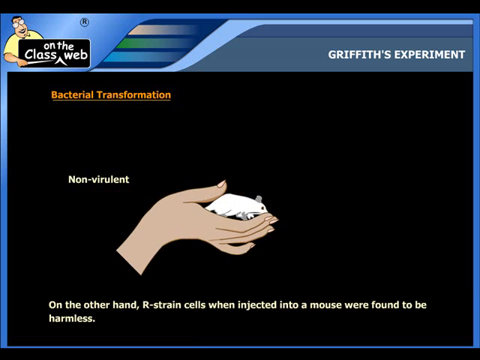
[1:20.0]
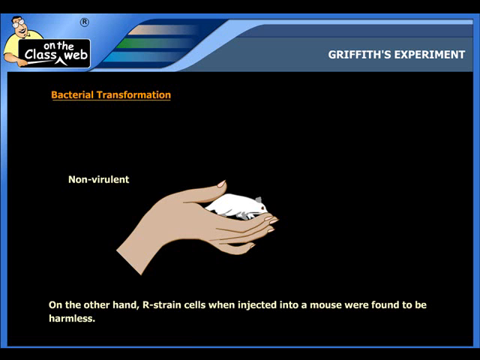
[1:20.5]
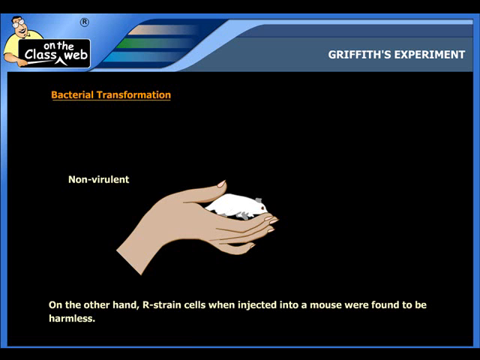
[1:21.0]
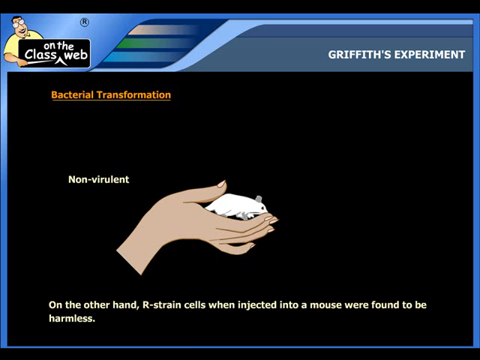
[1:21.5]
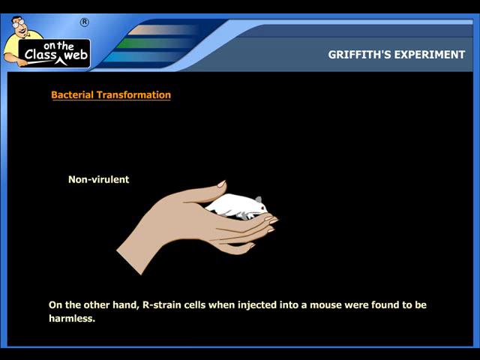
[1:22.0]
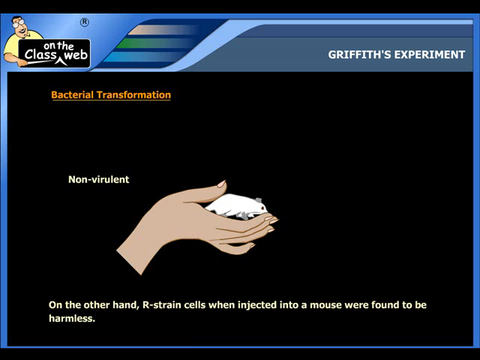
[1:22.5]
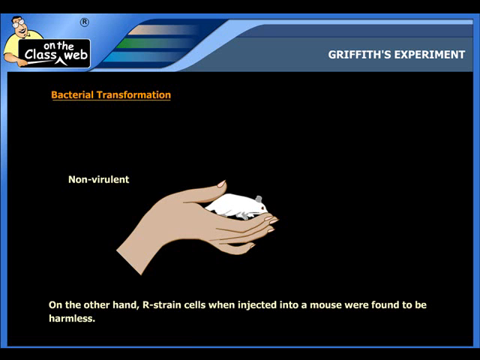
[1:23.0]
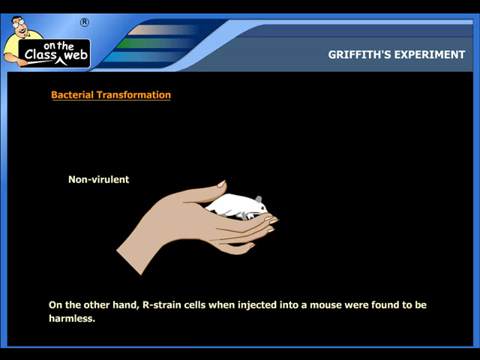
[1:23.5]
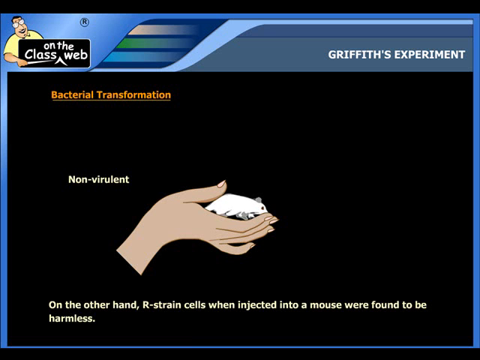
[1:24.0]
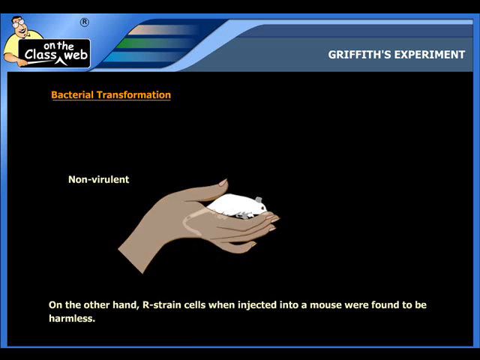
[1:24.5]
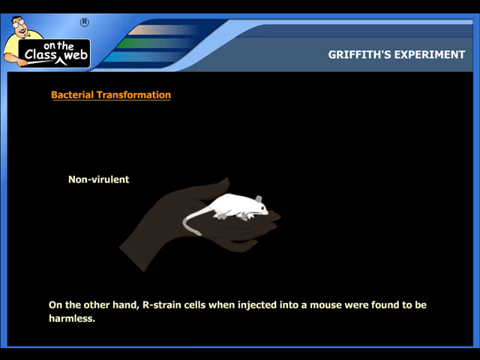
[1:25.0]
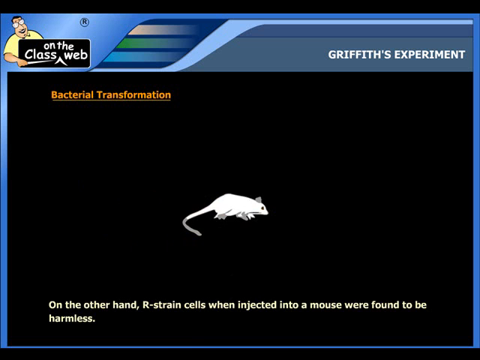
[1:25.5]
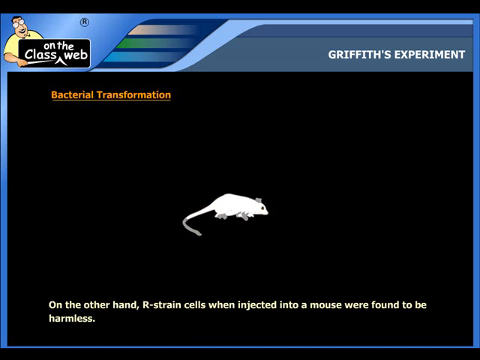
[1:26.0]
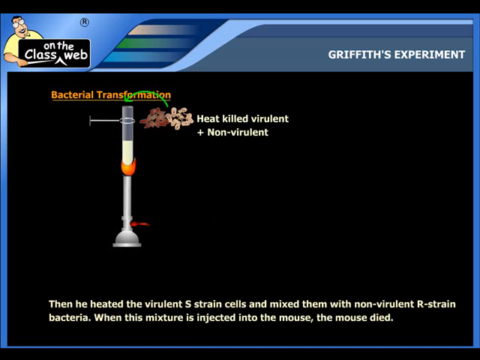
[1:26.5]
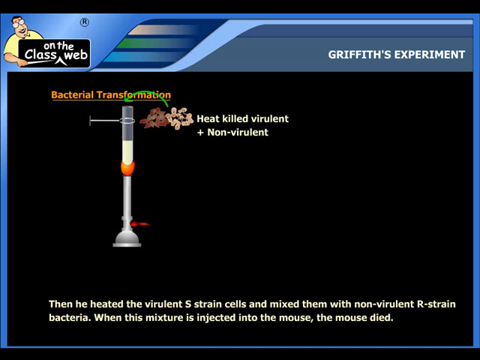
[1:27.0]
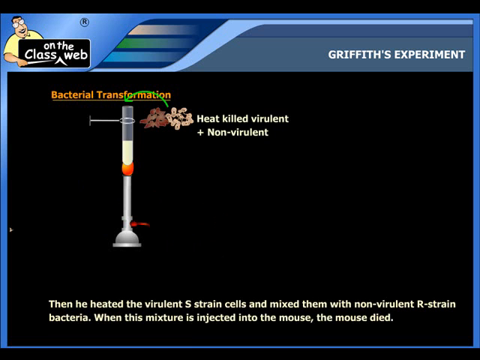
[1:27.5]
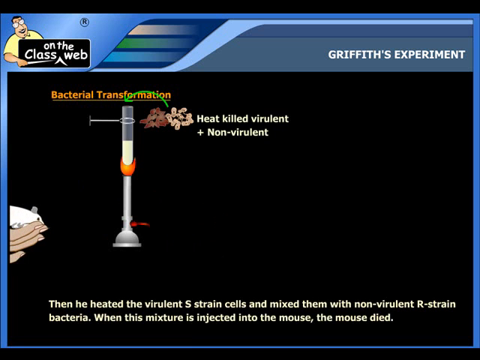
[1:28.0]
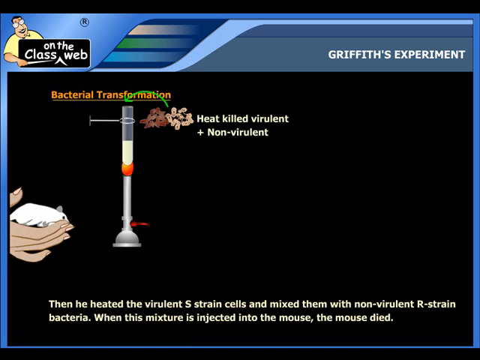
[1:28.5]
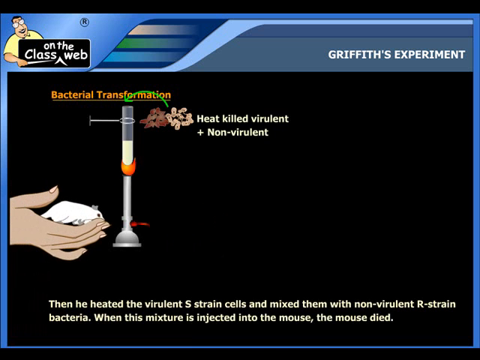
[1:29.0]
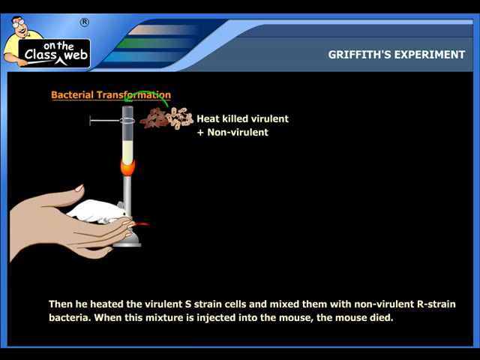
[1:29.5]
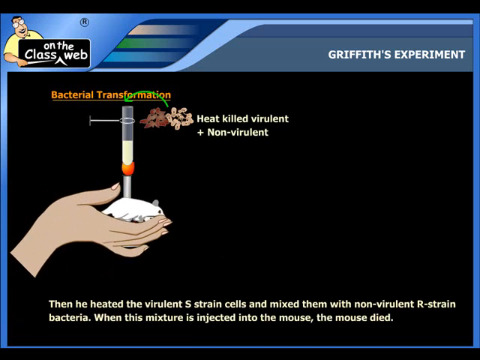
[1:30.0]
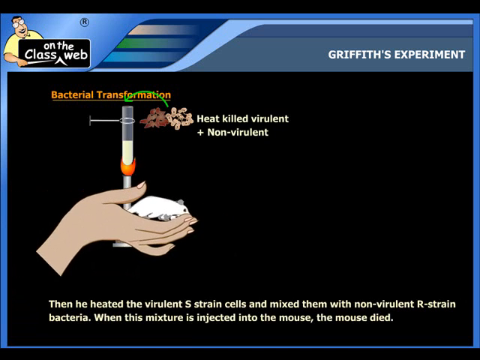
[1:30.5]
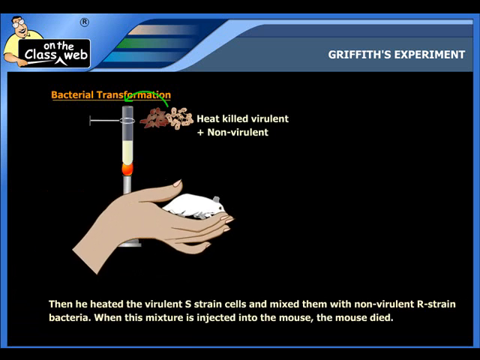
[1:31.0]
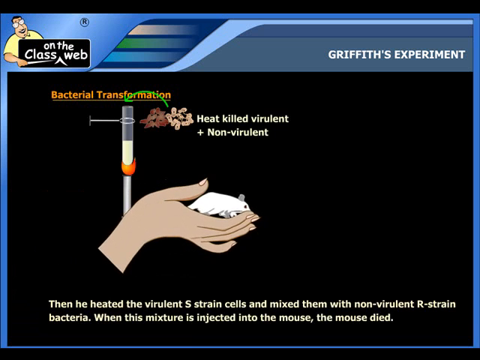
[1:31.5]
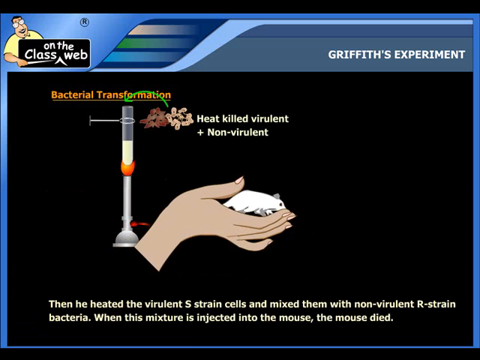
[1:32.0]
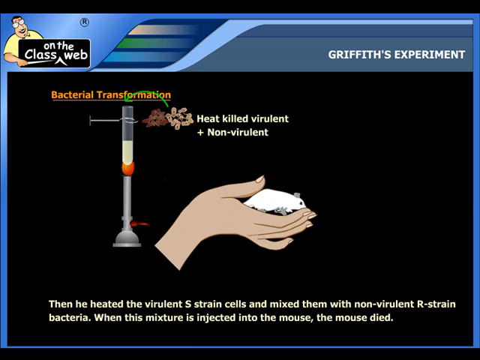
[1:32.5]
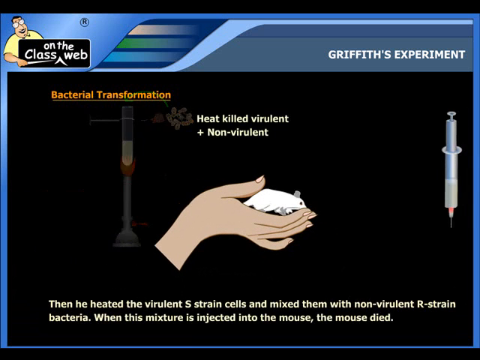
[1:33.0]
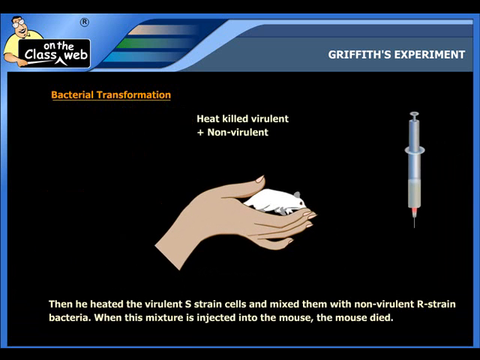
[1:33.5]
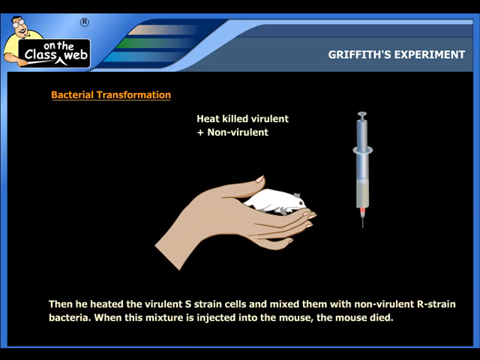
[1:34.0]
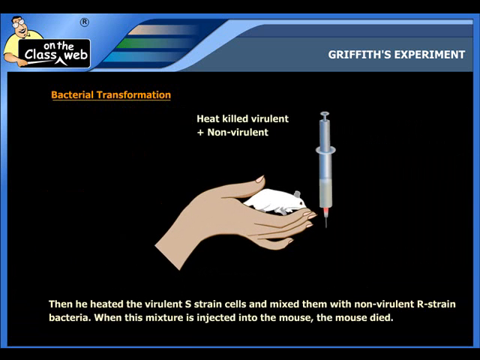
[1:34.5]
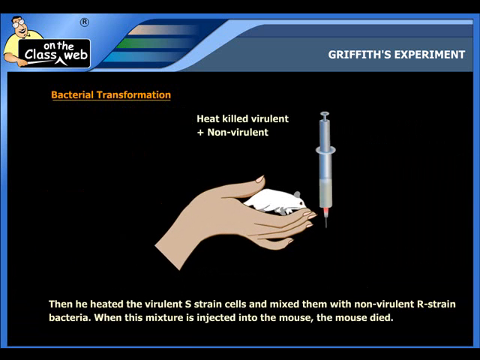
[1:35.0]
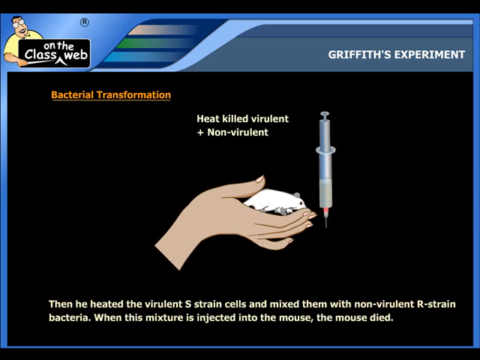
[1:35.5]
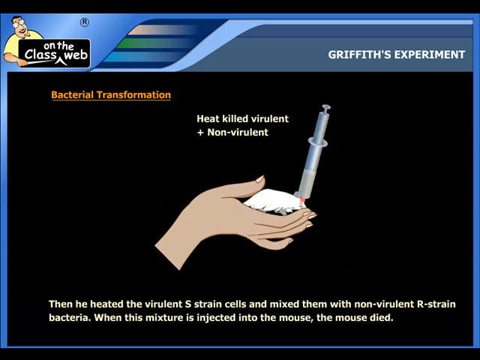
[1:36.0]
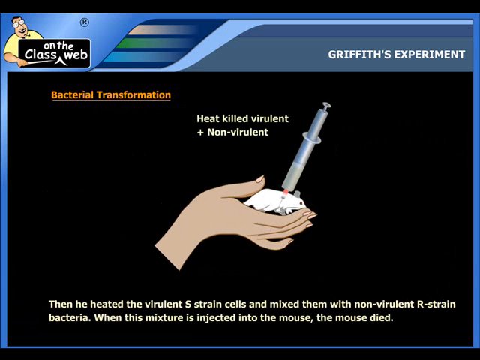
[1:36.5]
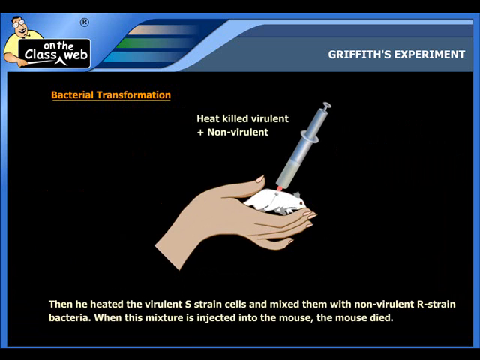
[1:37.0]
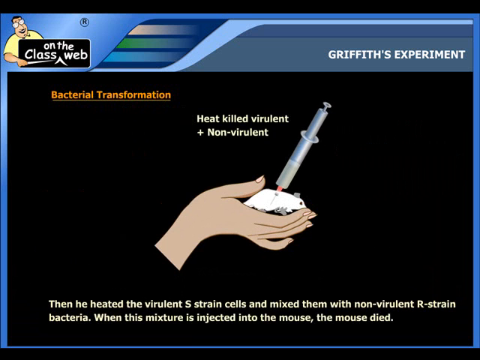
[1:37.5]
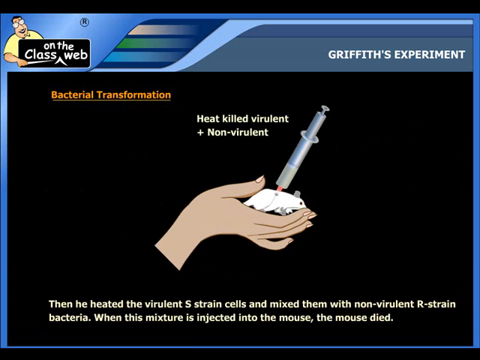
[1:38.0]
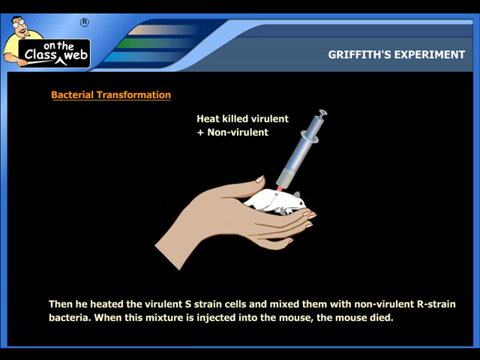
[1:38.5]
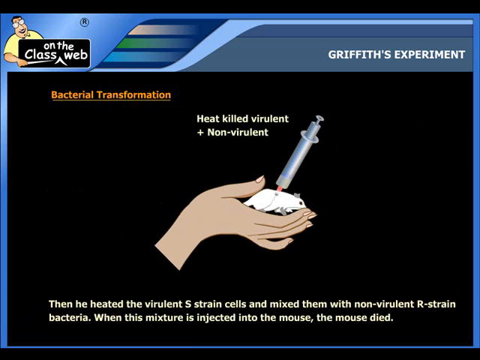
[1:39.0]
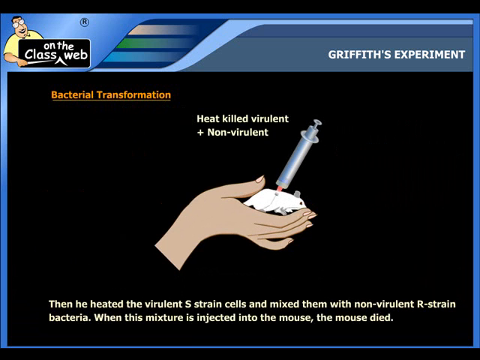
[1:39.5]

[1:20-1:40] In the upper left corner, a little cartoon character with a big smile, a teacher, has glasses, dark hair and a yellow shirt. In his right hand he holds a pointer, and in front of him, facing the viewer, is a sign with a black background and white lettering that says "on the class web." At the upper far right, white letters read "Griffith's Experiment." Below, on a big black screen, orange letters say "Bacterial transformation," and under that is "non-virulent." A cartoon picture shows a human right hand cradling a white lab mouse. Text at the bottom says: "on the other hand, R-strain cells when injected into a mouse were found to be harmless."